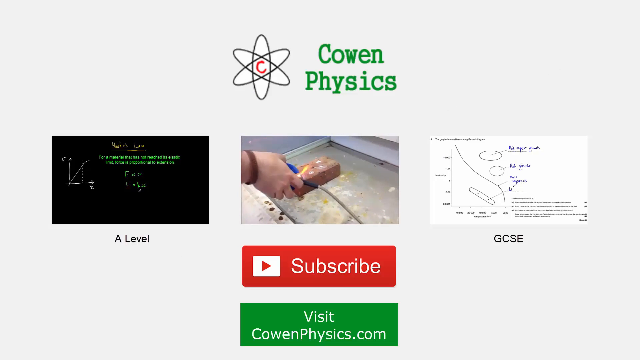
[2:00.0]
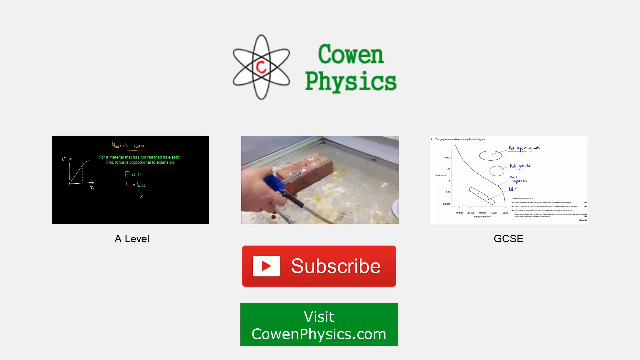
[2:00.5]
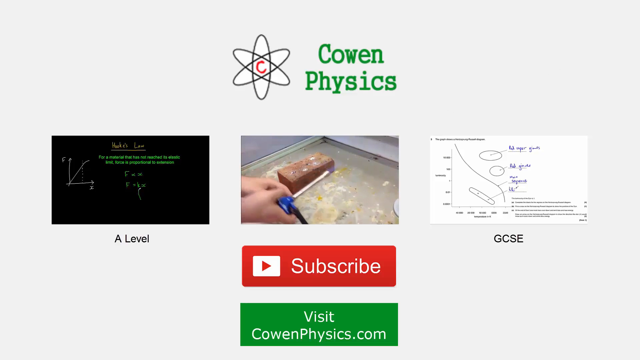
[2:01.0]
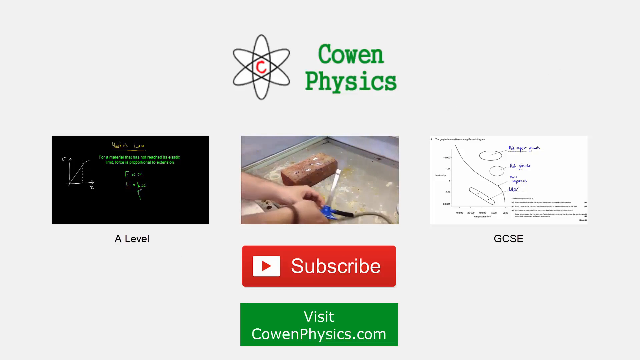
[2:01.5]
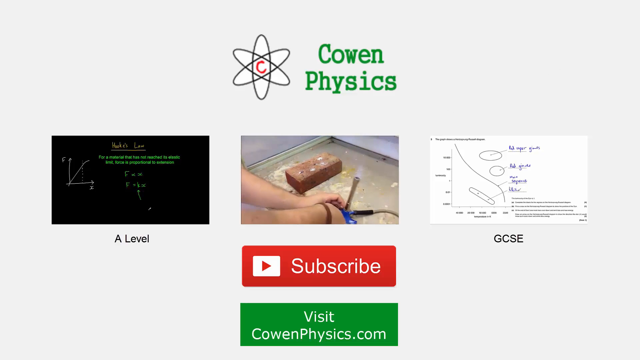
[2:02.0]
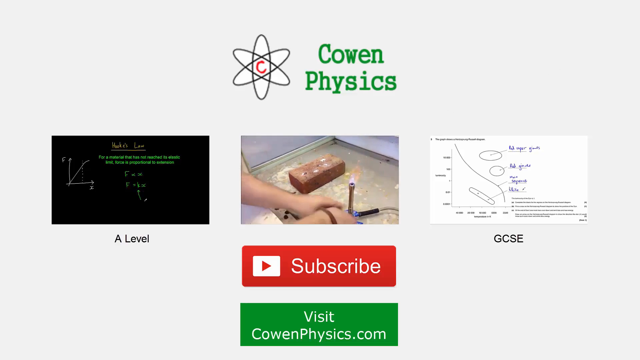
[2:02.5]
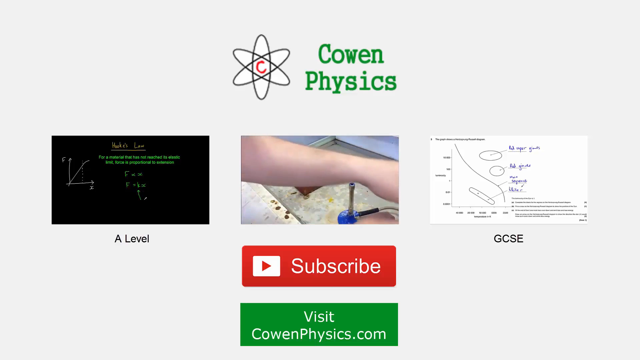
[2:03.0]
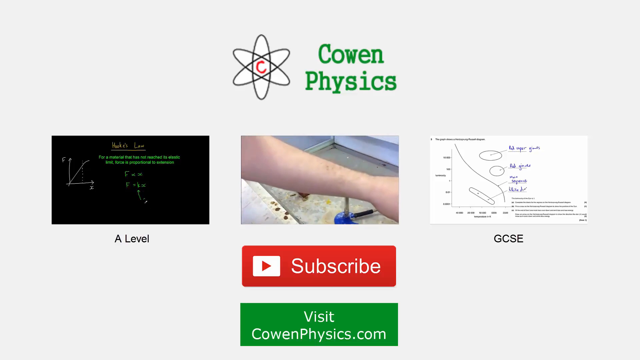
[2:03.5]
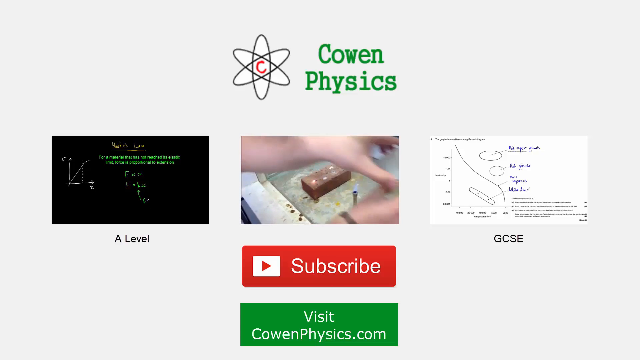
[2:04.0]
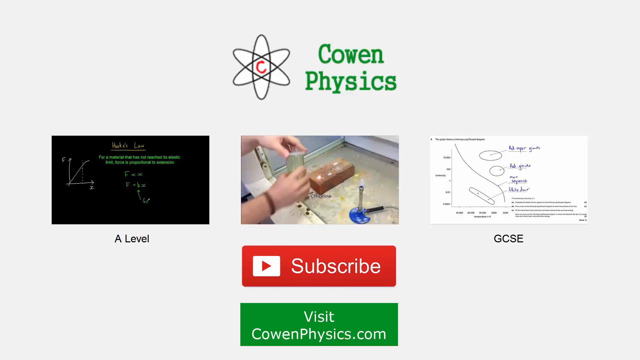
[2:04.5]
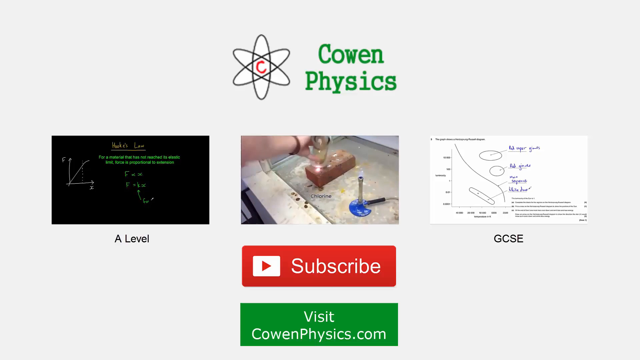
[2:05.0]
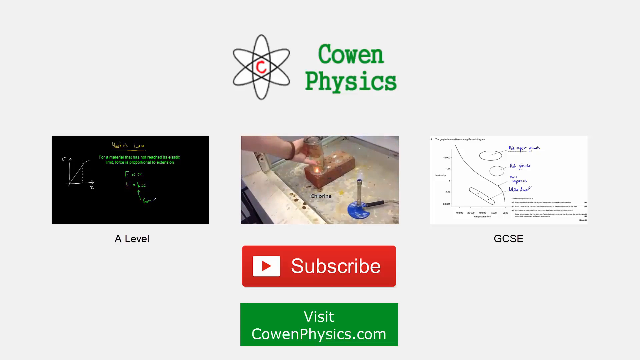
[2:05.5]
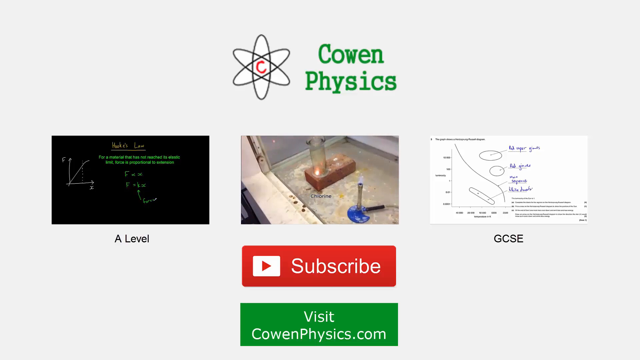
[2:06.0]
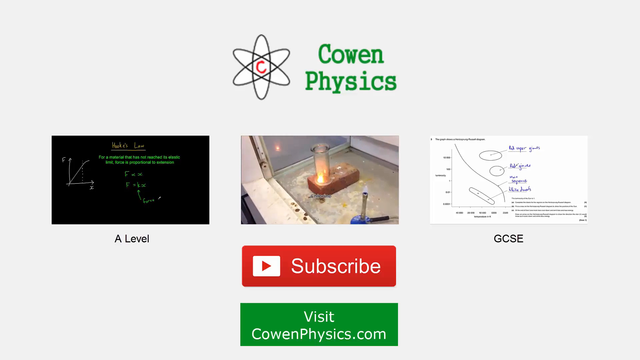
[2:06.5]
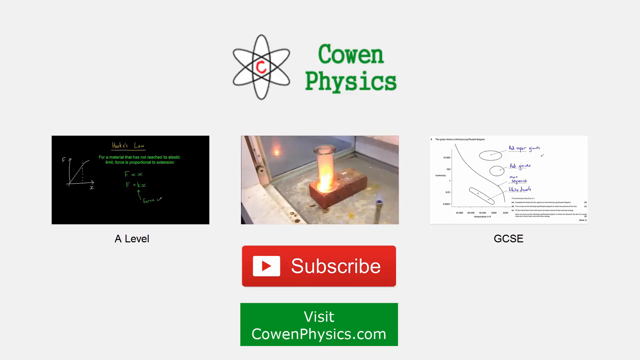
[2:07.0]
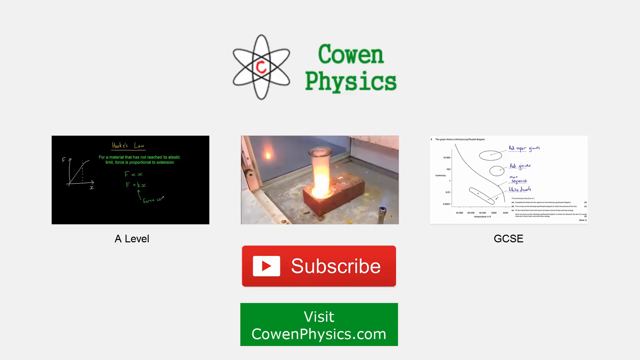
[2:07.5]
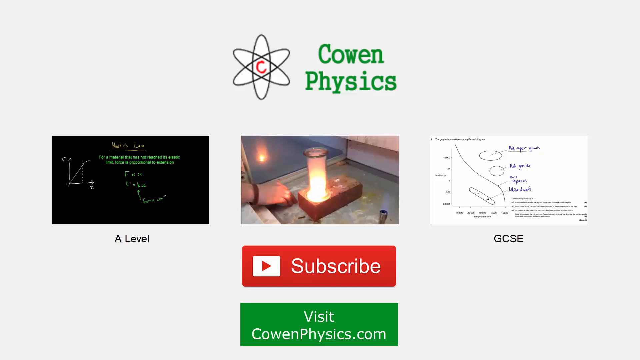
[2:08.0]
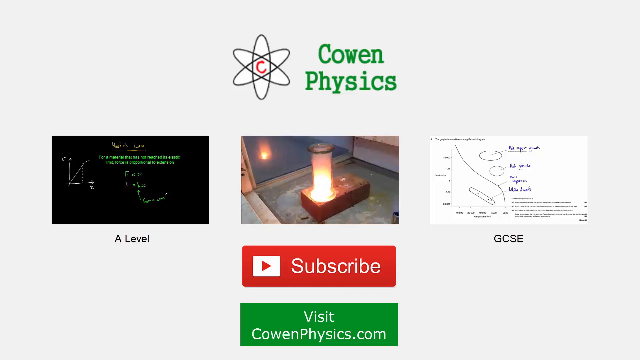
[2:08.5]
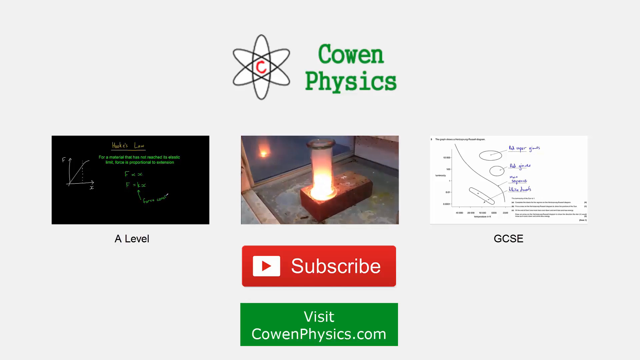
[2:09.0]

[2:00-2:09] A white background shows the phrase "Cowen Physics" in green text at the top, with a small logo beside it showing overlapping circles with a C inside. Below are three videos or pictures: on the left, a still image labeled "A Level"; in the middle, a video playing that seemingly shows a brick and a flame; and on the right, a still image labeled "GCSE". Below those is a red subscribe button with a play button, likely for YouTube, and finally a green button that says "visit CowenPhysics.com".